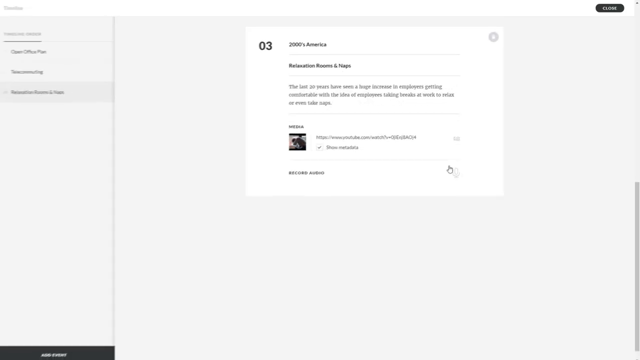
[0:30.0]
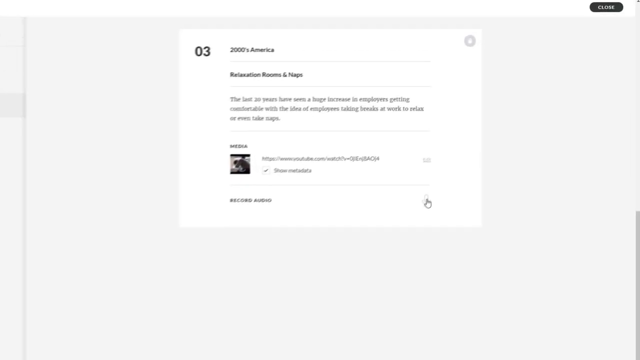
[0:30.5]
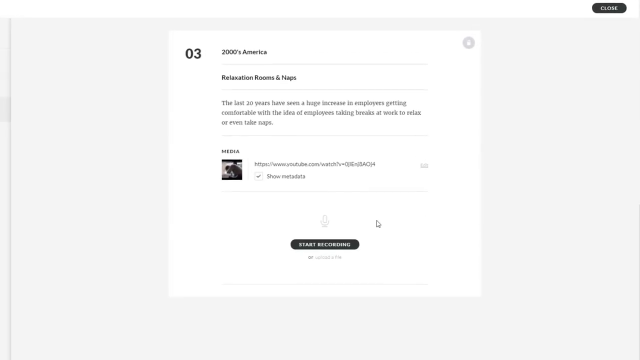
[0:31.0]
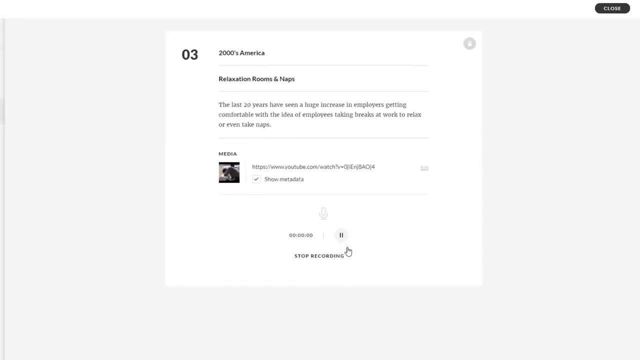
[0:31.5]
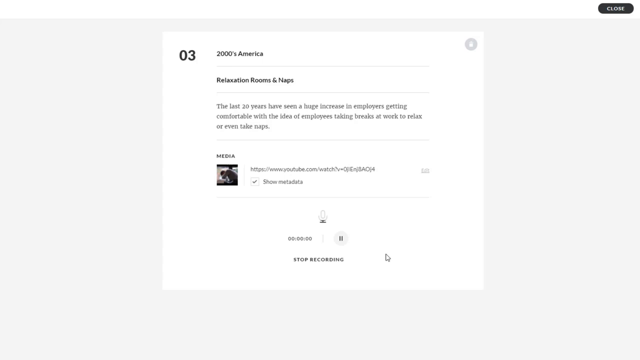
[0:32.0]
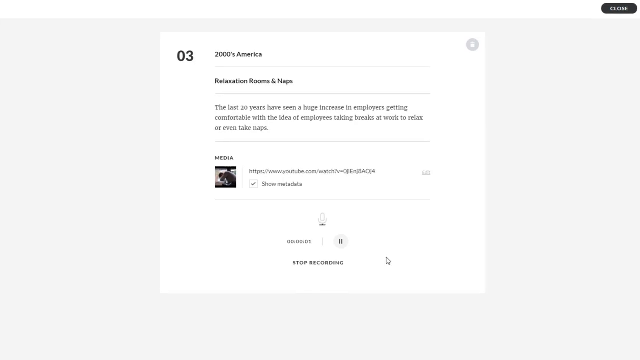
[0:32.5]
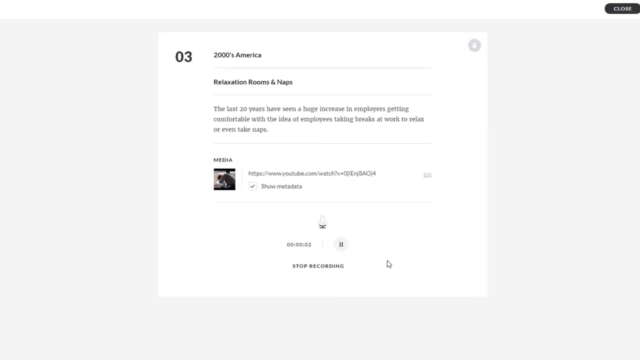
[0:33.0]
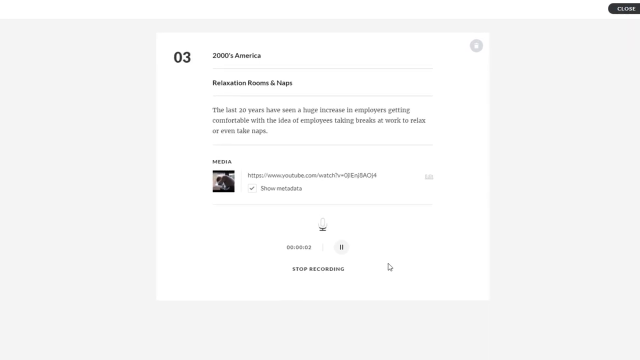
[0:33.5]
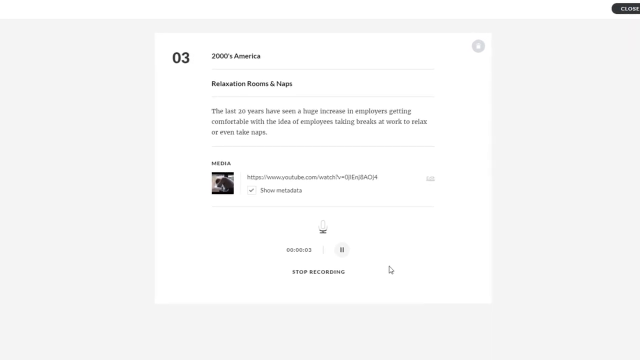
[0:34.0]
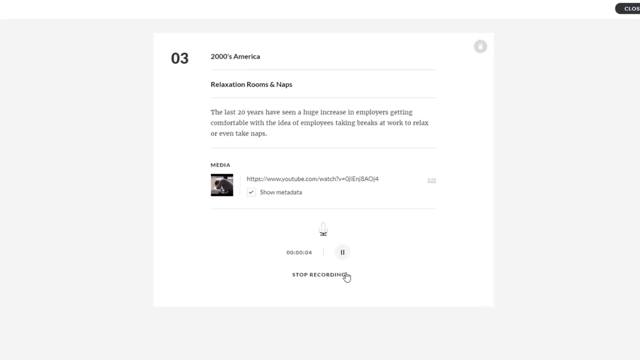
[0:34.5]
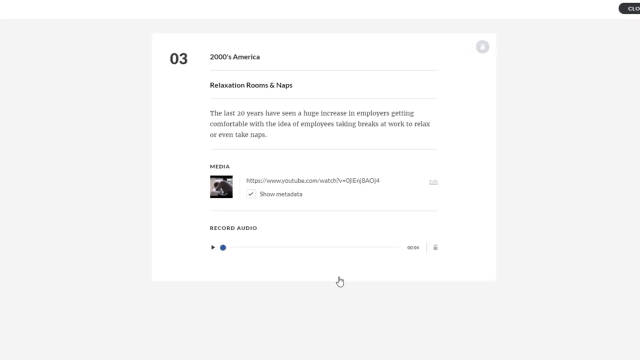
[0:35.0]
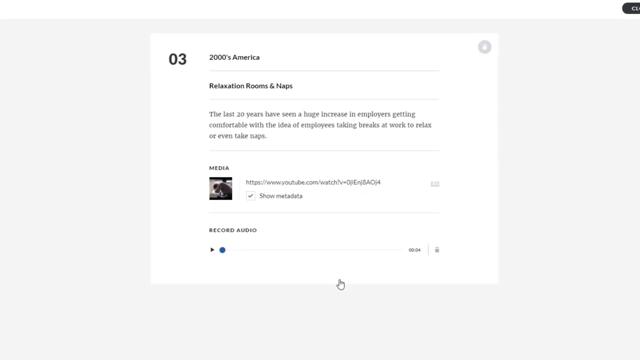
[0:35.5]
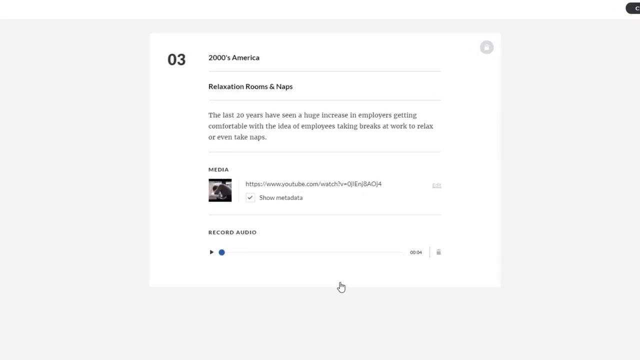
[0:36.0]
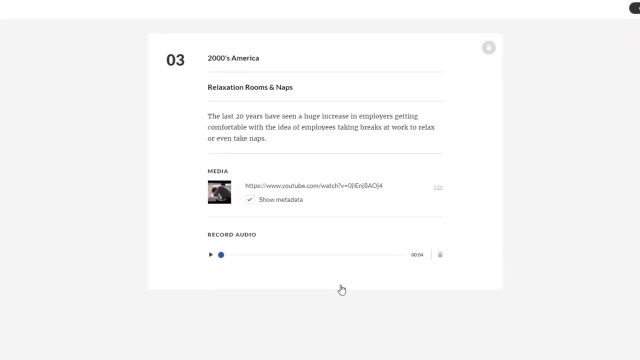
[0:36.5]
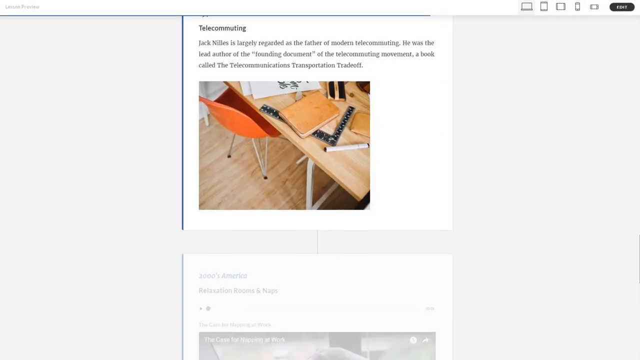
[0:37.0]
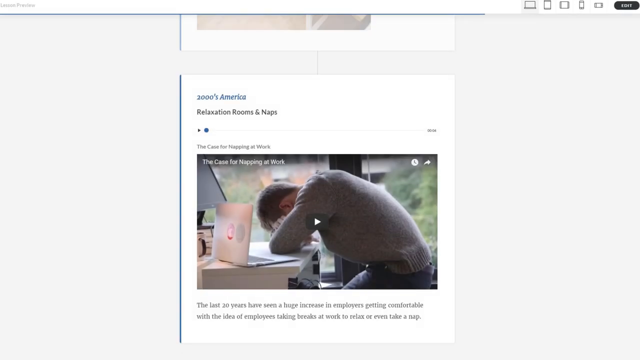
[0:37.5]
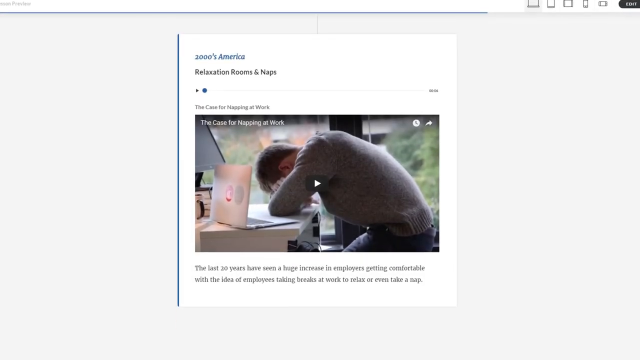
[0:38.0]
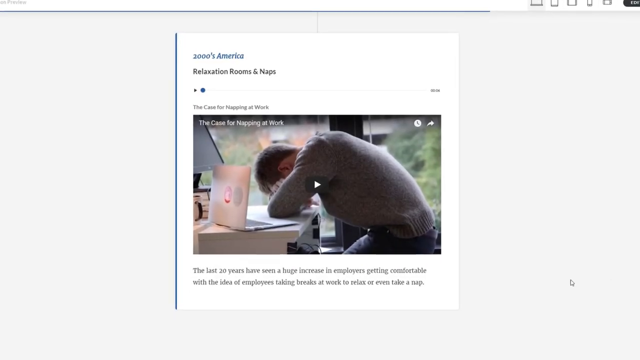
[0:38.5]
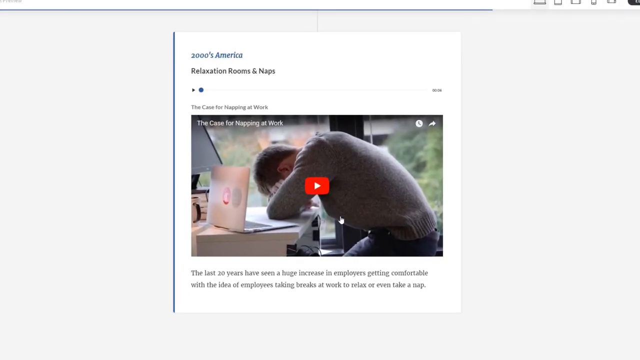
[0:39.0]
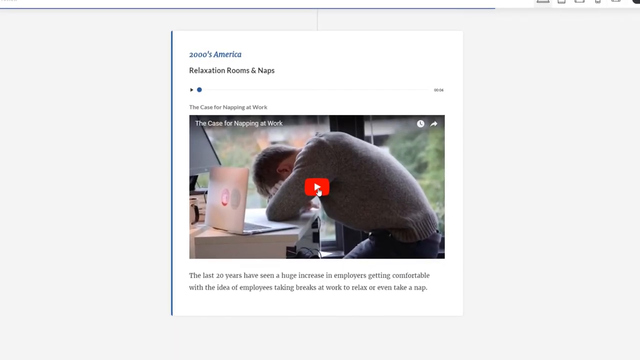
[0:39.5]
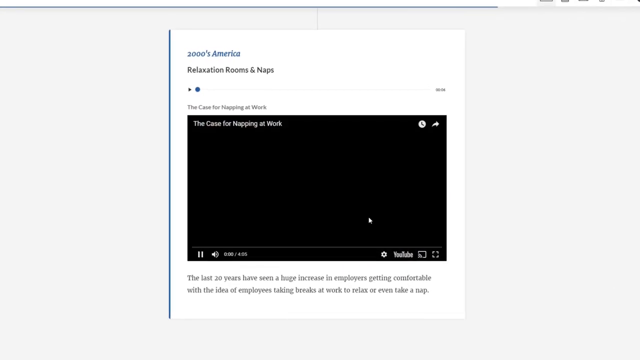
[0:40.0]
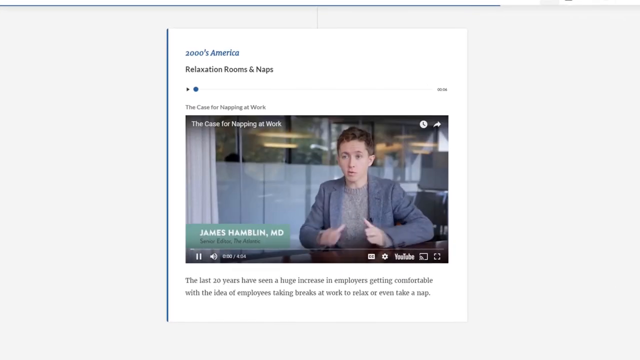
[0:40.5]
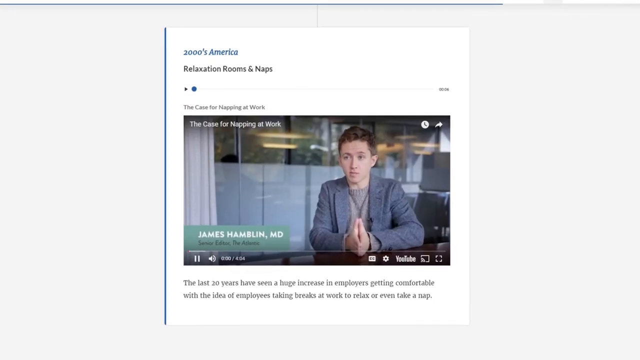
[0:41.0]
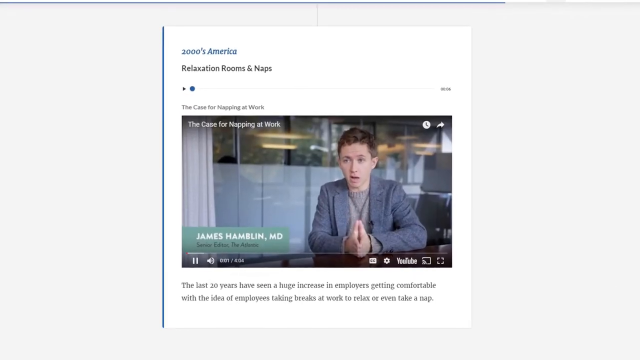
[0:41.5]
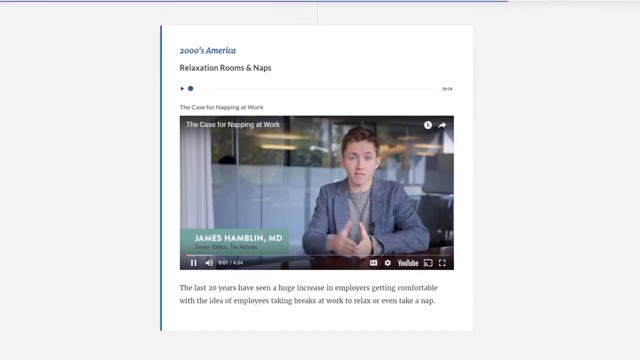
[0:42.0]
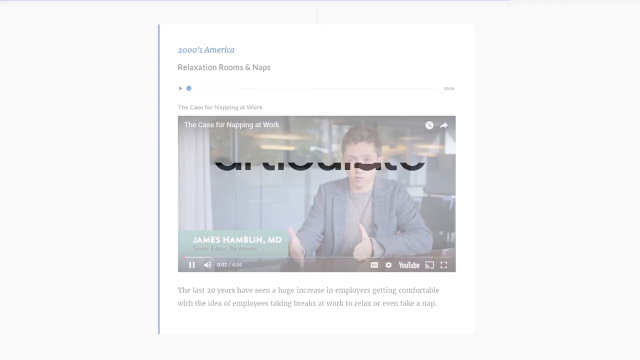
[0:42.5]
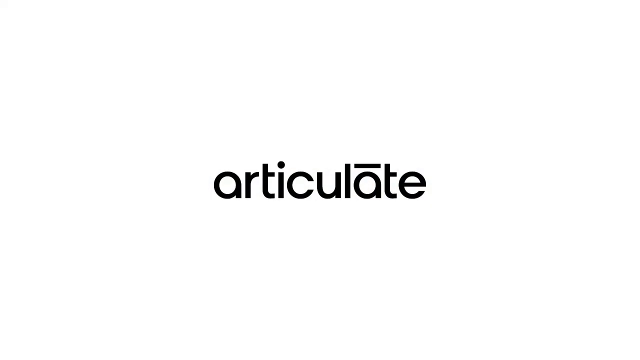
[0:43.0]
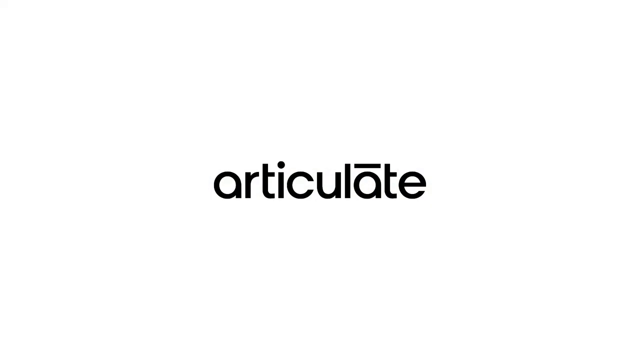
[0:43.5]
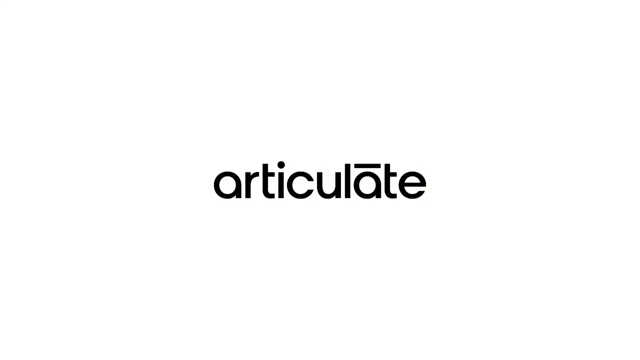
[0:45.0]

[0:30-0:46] The user clicks a black button at the bottom that looks like it says they are recording something. A mic icon that is mostly white fills up a little with black from the bottom when they speak. The user clicks stop recording, and icons appear: text says "record audio", there is a play button with a blue circle beside it, and on the right the length of the recorded audio is shown. The view then scrolls down to show the tired man. The user clicks the button, and a man appears talking toward the viewer; his name looks like James Habelin, MD. He wears a dark gray suit and has his hands sort of clasped together, bringing them down and then out to the left as he talks. A very quick white transition screen follows, and the word "articulate" appears again from the top down and stays there for the rest of the video.